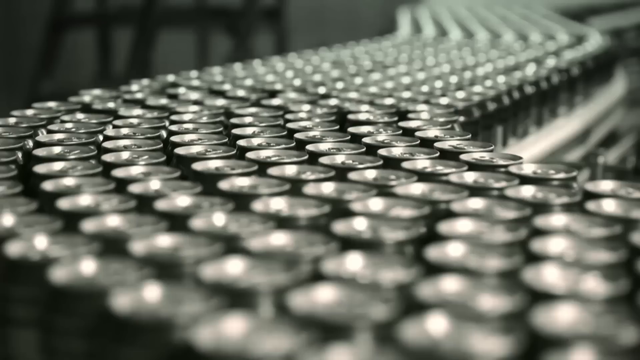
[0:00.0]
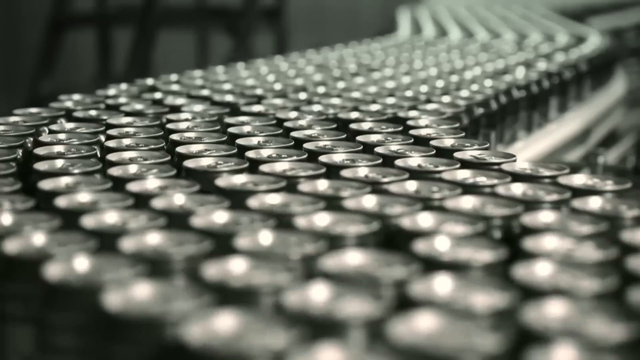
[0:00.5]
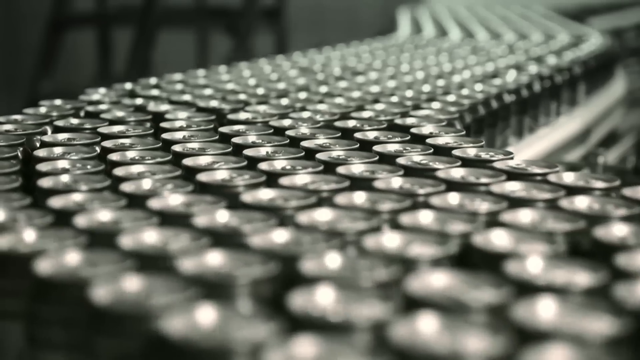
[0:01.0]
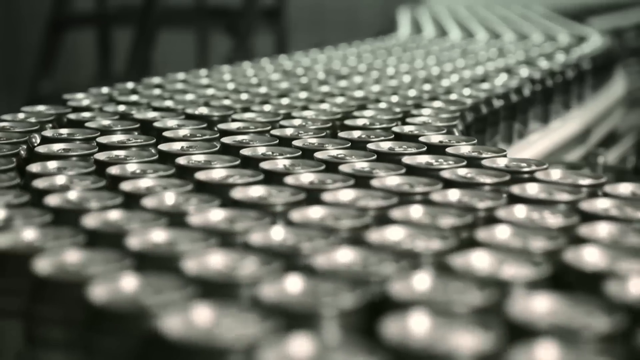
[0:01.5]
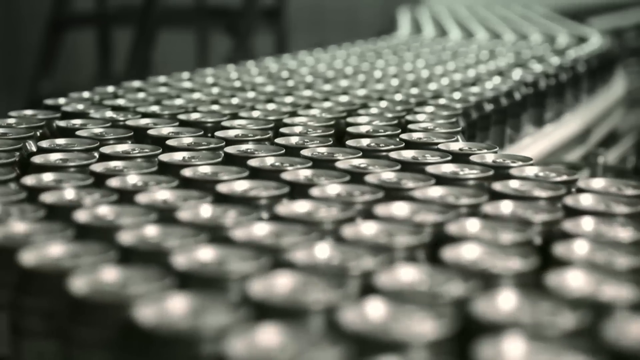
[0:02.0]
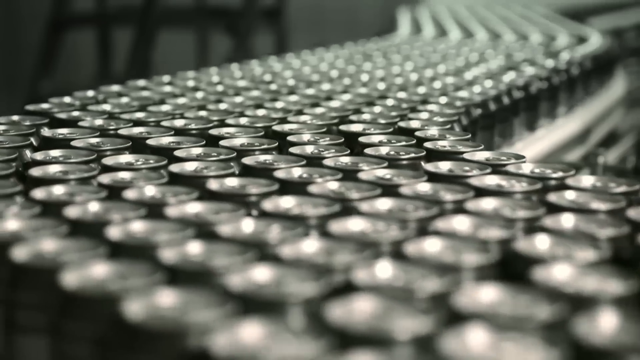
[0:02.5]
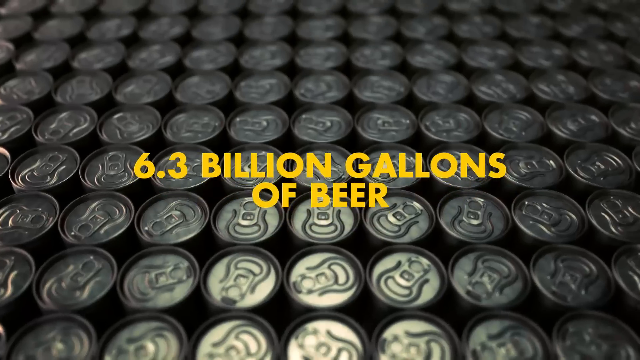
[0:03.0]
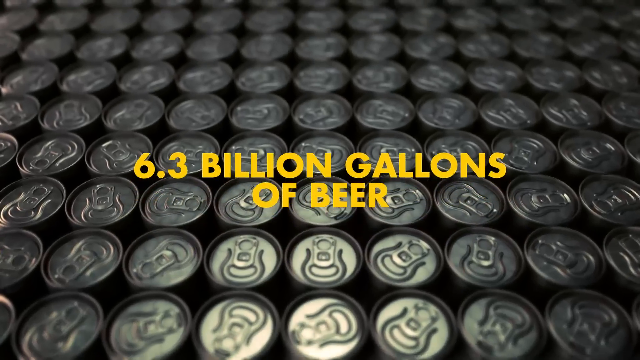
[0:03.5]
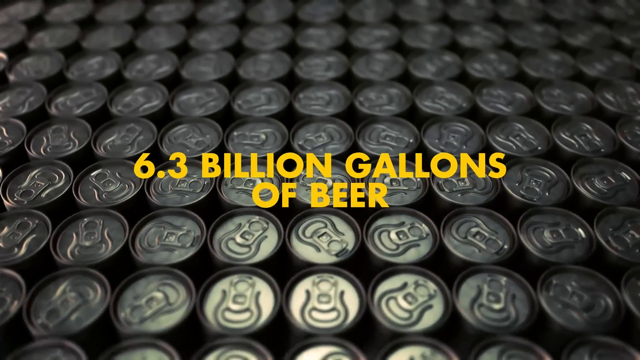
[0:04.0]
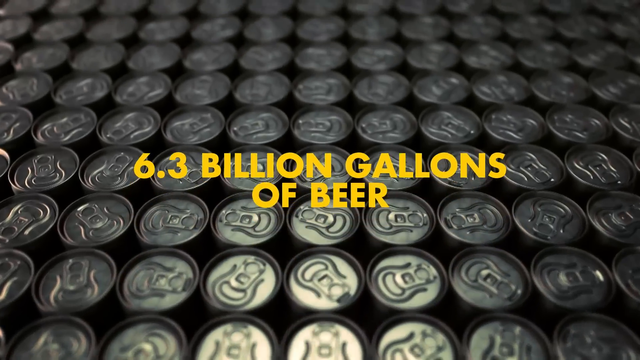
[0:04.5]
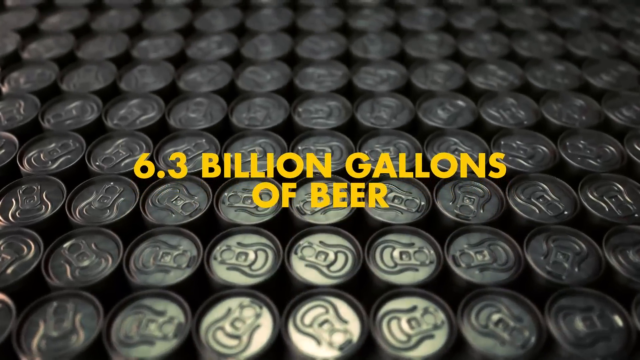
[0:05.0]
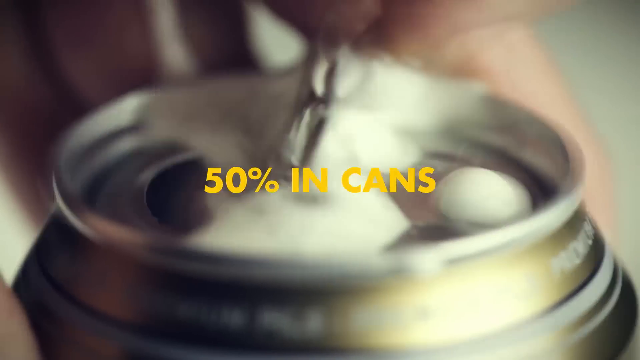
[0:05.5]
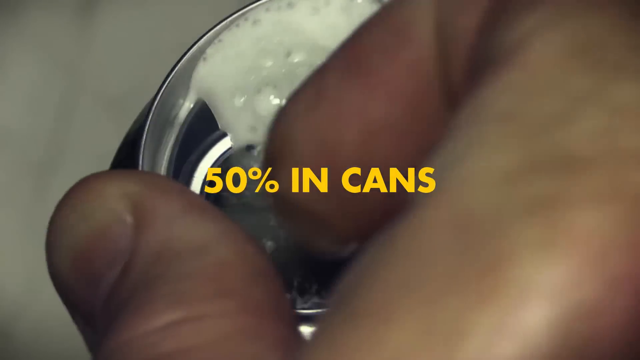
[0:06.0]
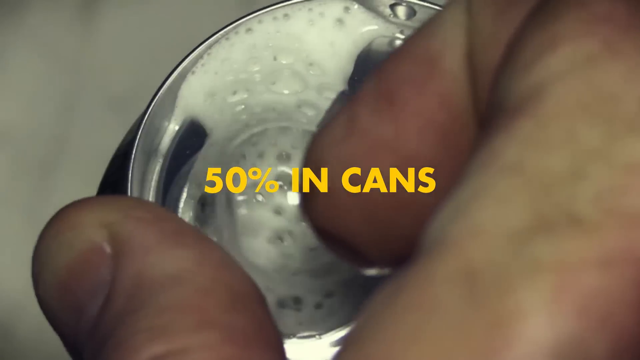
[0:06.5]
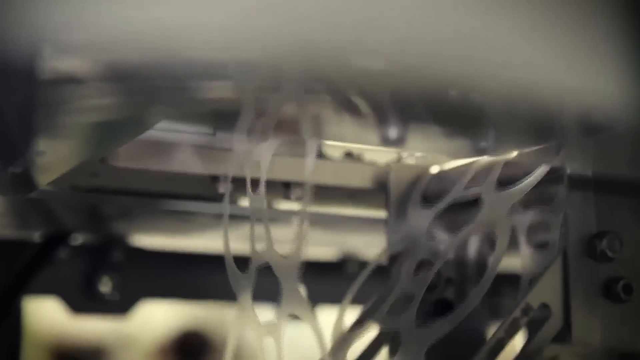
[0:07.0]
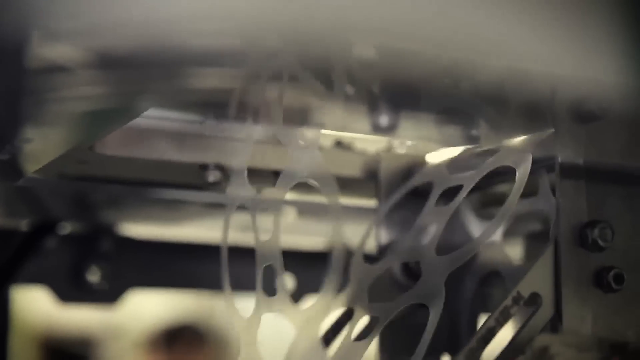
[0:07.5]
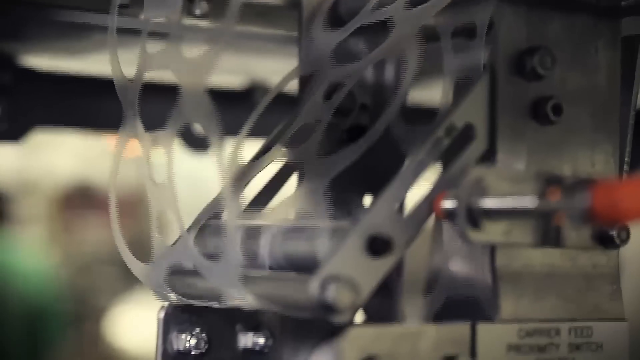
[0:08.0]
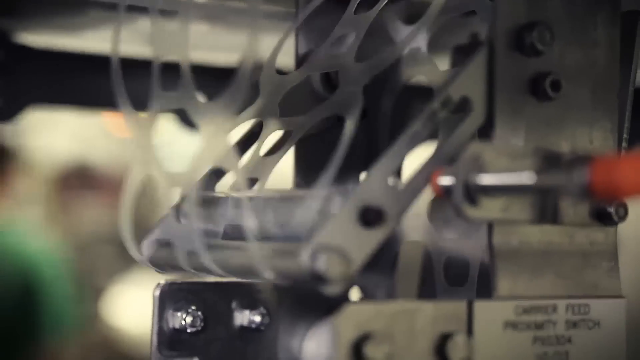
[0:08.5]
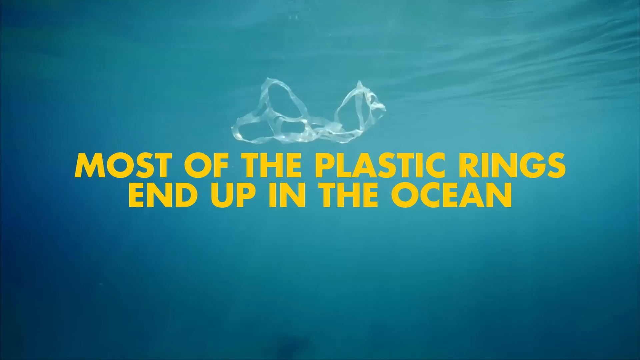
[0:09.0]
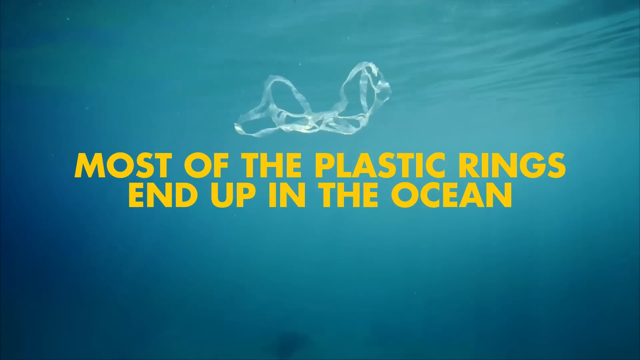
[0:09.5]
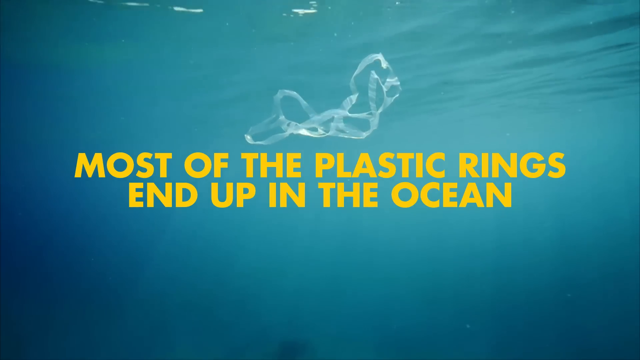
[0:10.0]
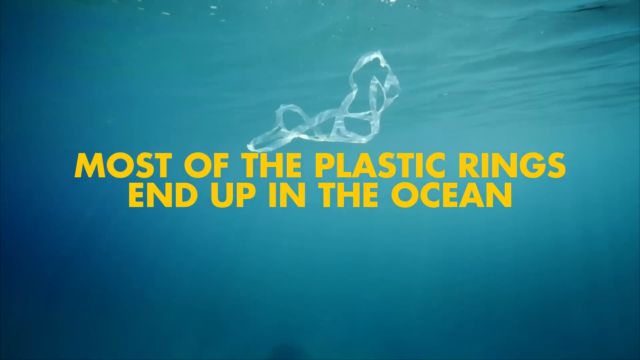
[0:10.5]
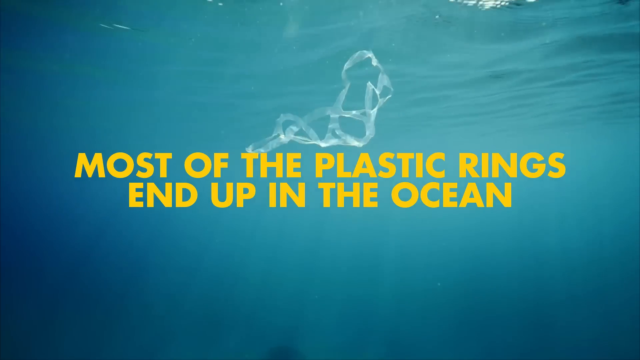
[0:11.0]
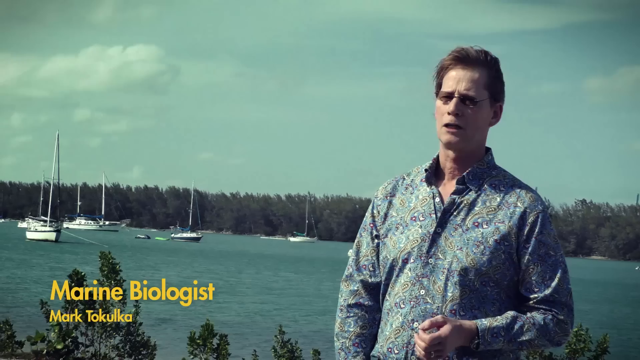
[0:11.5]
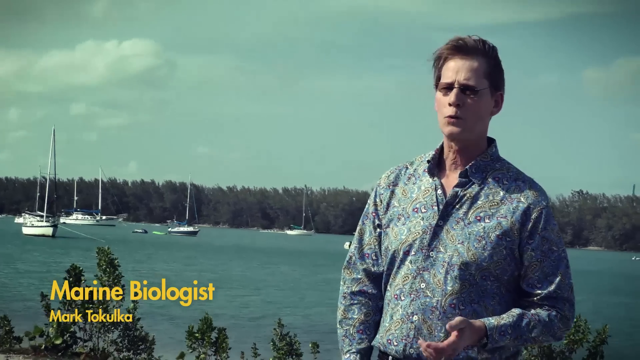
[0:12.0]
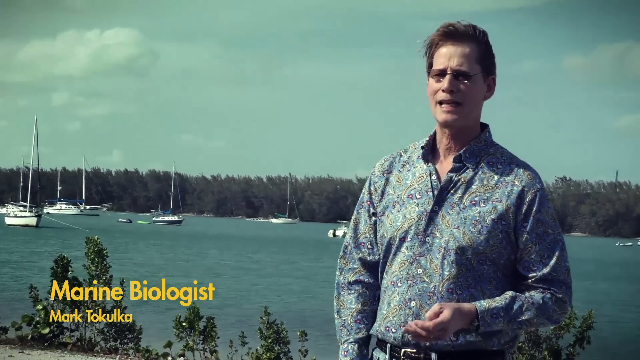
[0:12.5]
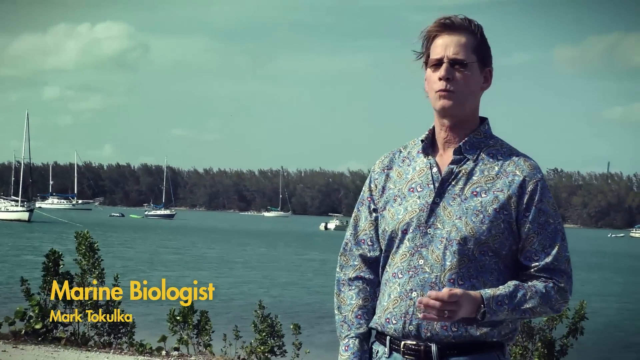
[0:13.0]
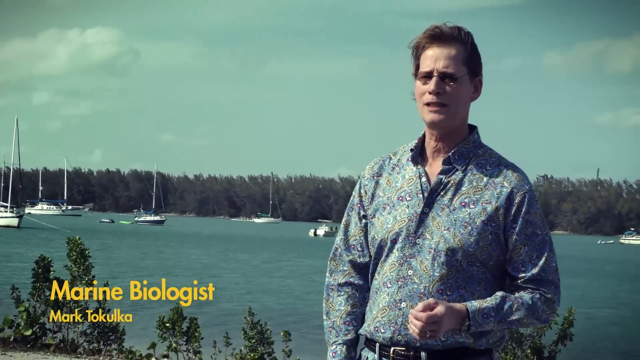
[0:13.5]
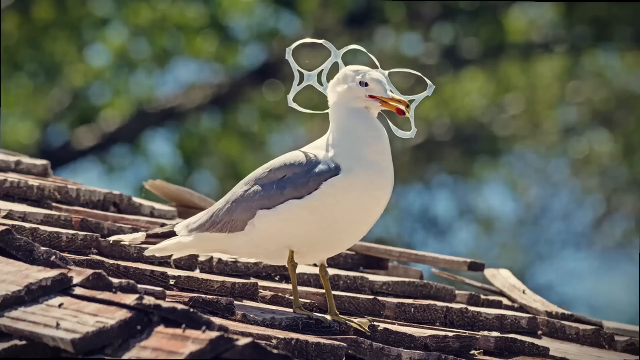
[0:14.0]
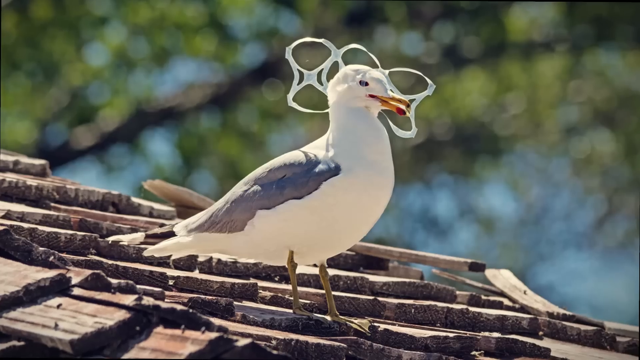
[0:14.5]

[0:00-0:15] Cans from a brewery, Saltwater Brewery, are shown, and the video states that 50% of cans' plastic rings end up in the ocean. Plastic rings are seen on a seagull's head and on a turtle's head, and the damage done to fish is shown. There are computers. The footage moves between documentary-style shots of people and what seem to be generated sequences of the sea and the canning process, with artificial footage mixed in with real footage. Another man is talking, and he is seen going to a liquor store. Some girls at a bar drink beer, and other patrons are at the bar as well, with locals and random people becoming the subject. The video returns to turtles, showing turtles swimming and dolphins swimming.